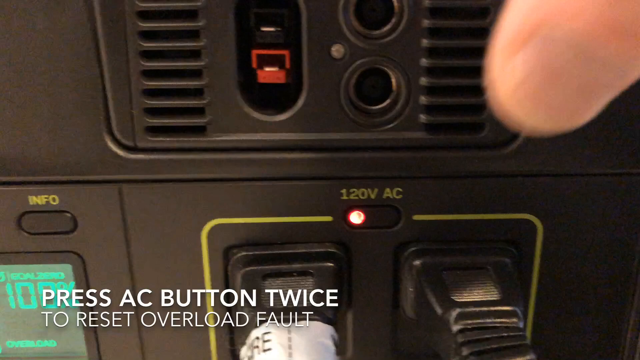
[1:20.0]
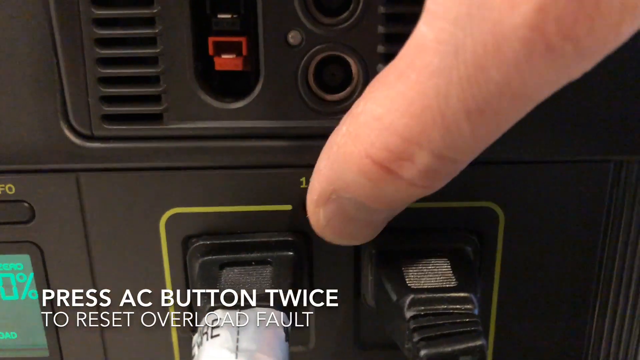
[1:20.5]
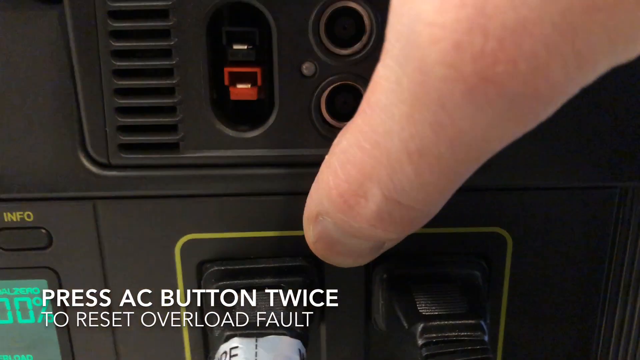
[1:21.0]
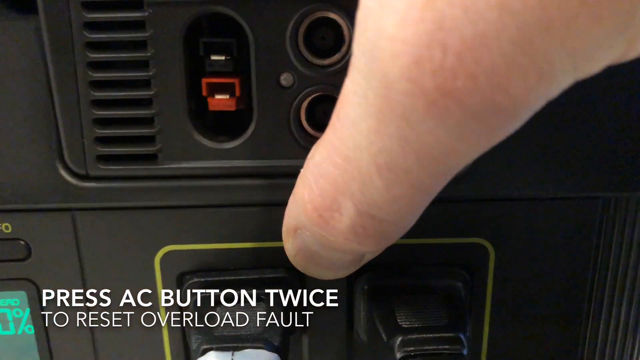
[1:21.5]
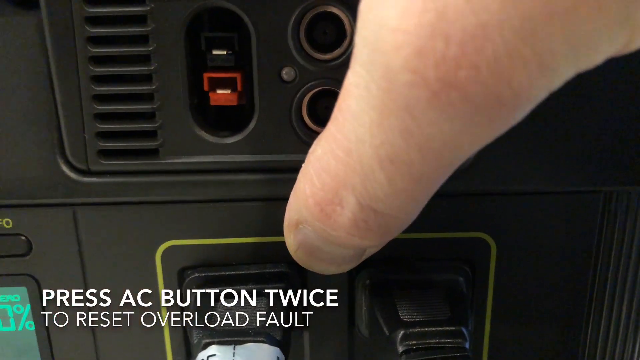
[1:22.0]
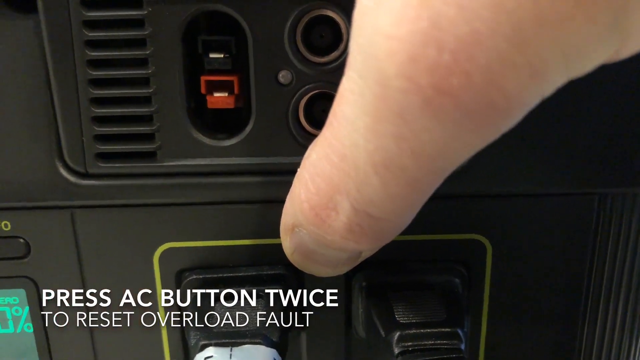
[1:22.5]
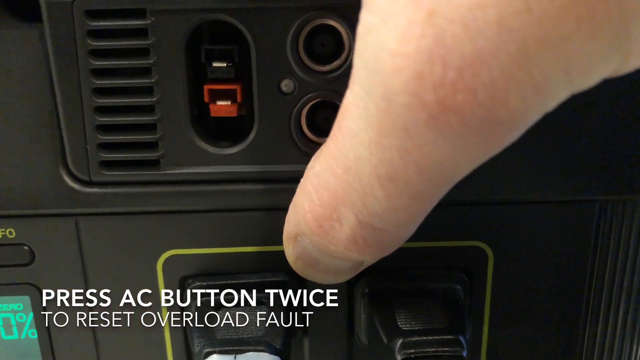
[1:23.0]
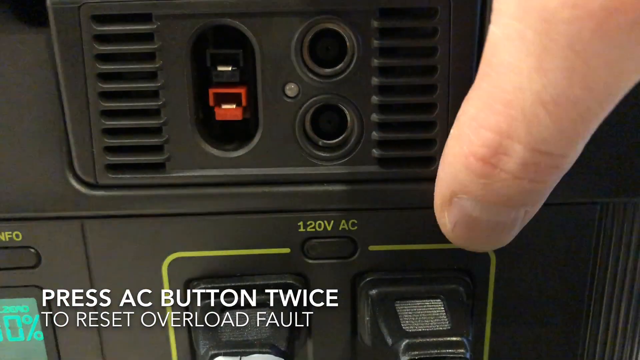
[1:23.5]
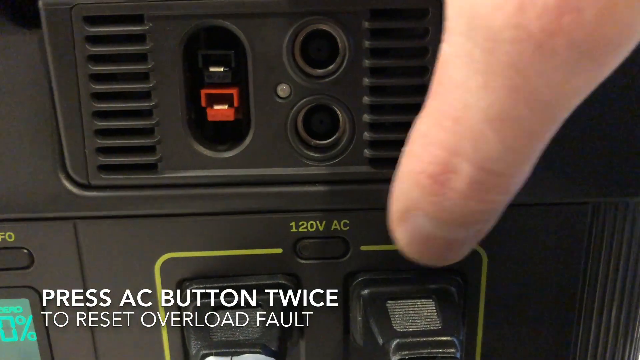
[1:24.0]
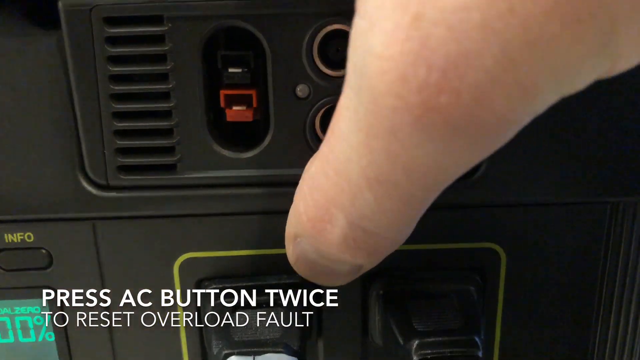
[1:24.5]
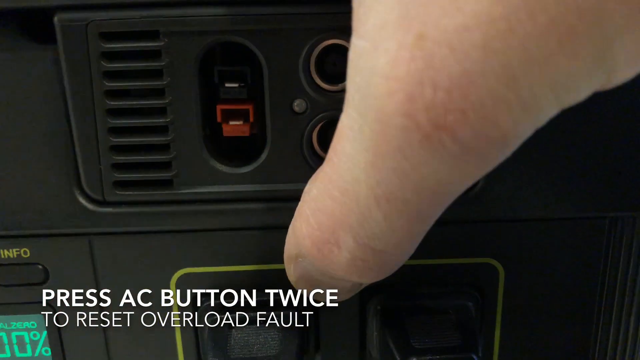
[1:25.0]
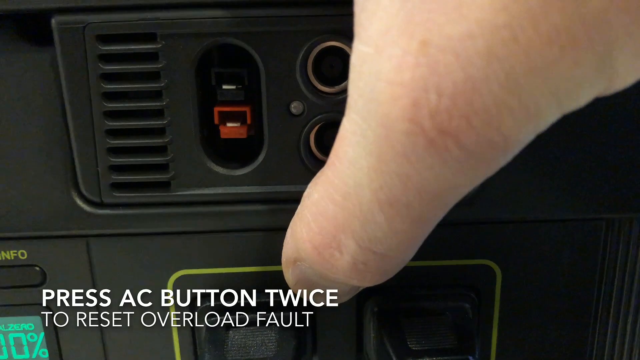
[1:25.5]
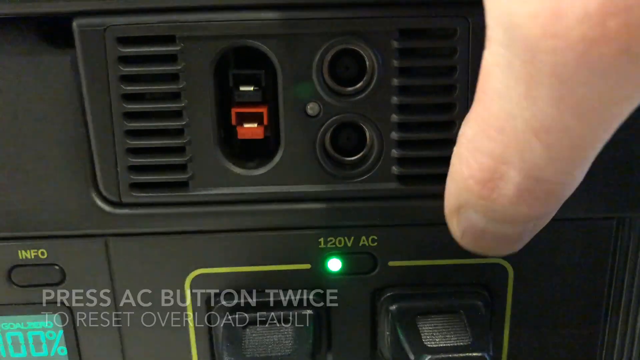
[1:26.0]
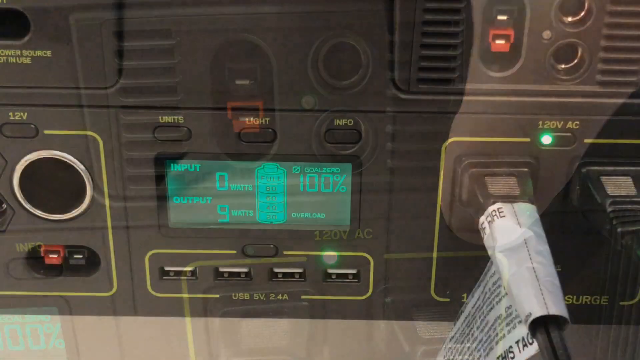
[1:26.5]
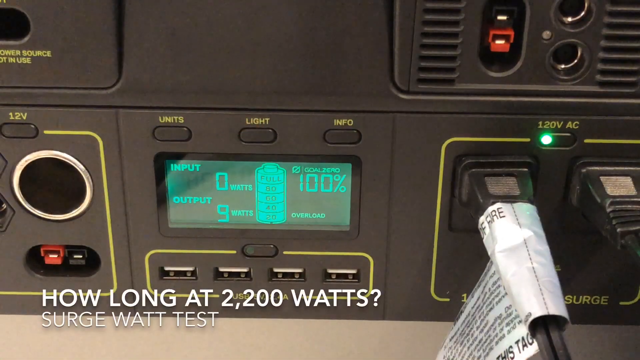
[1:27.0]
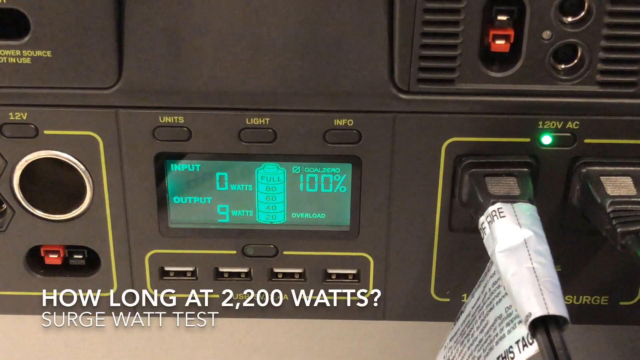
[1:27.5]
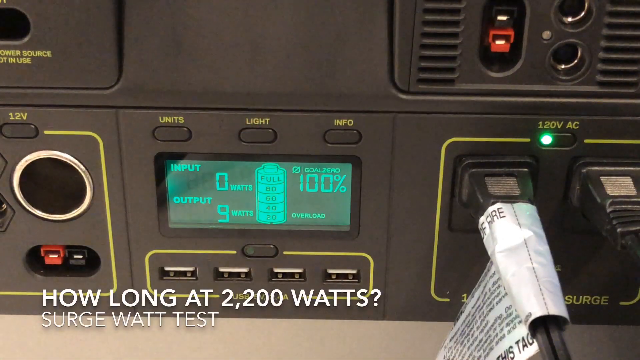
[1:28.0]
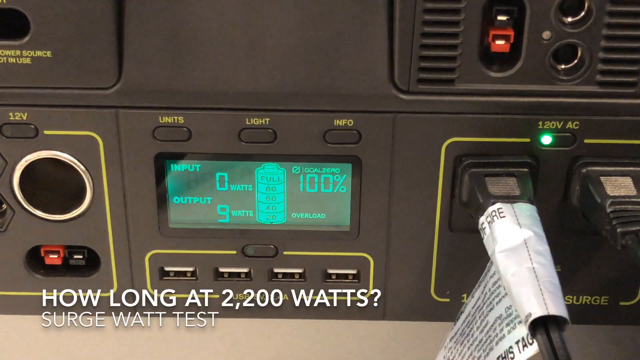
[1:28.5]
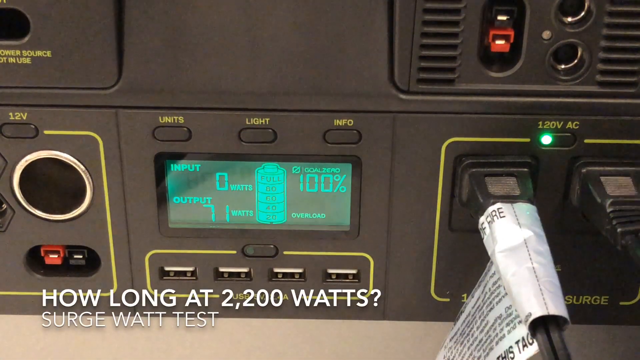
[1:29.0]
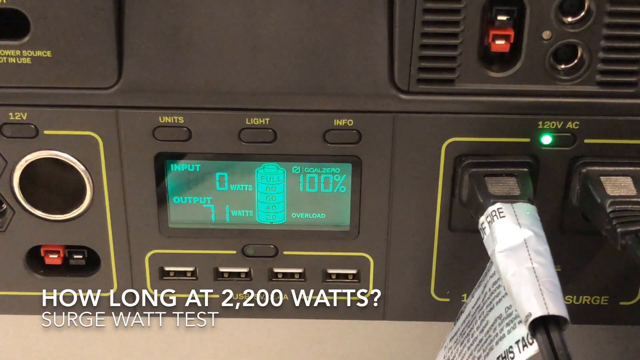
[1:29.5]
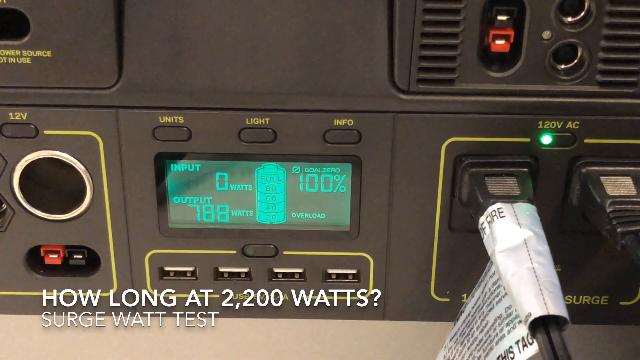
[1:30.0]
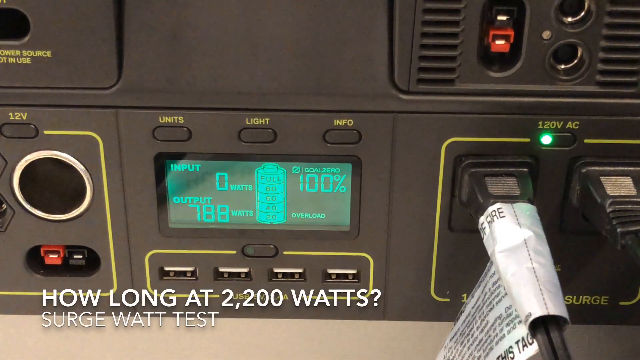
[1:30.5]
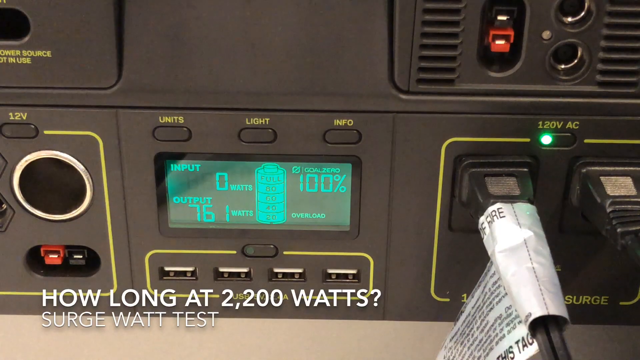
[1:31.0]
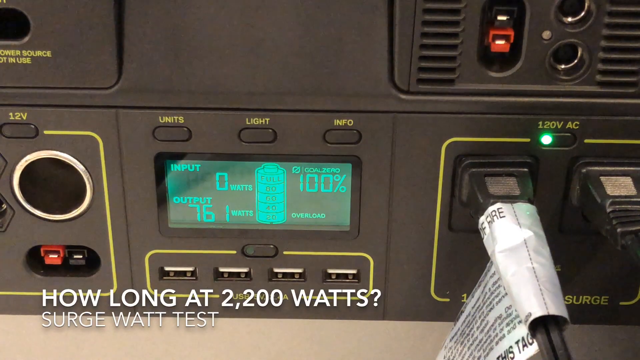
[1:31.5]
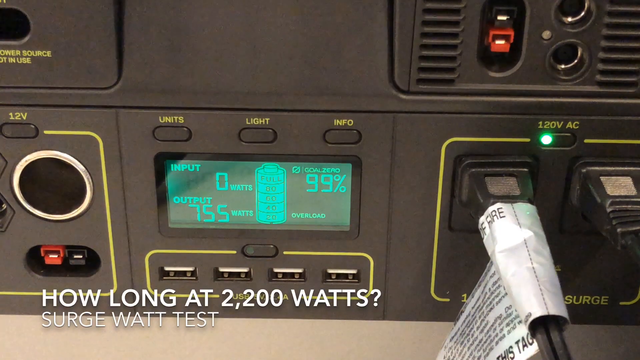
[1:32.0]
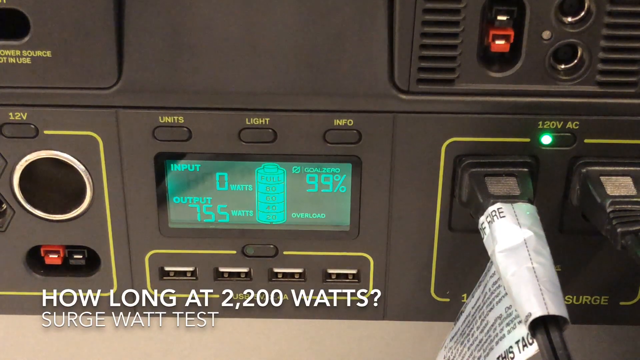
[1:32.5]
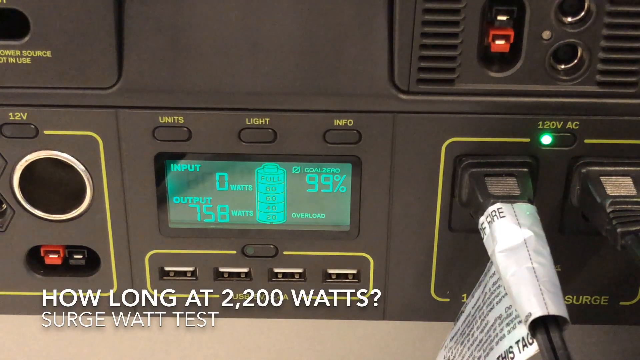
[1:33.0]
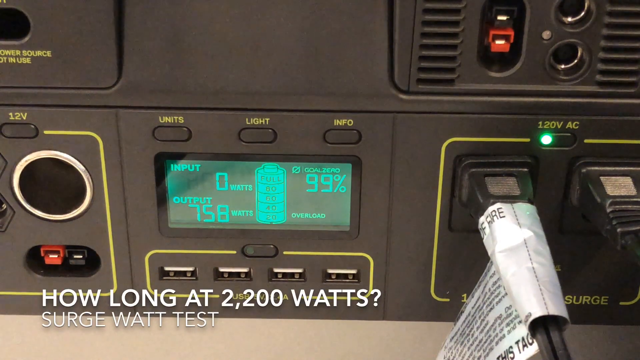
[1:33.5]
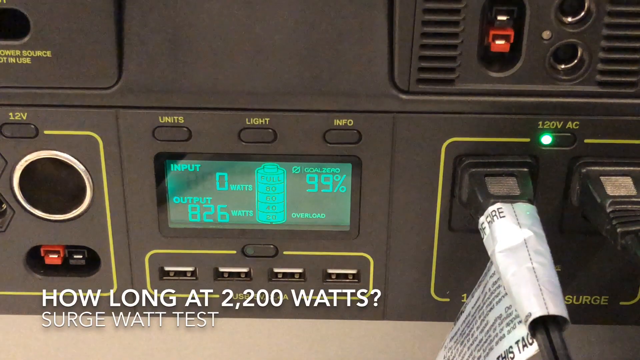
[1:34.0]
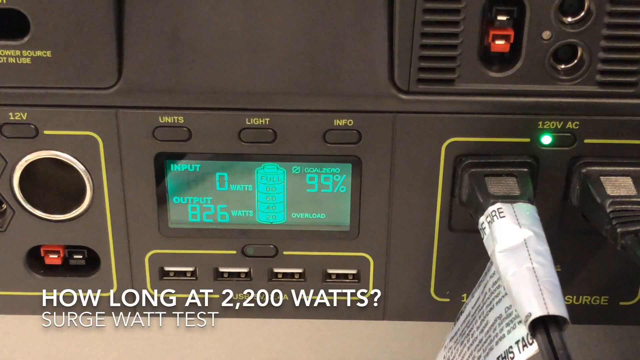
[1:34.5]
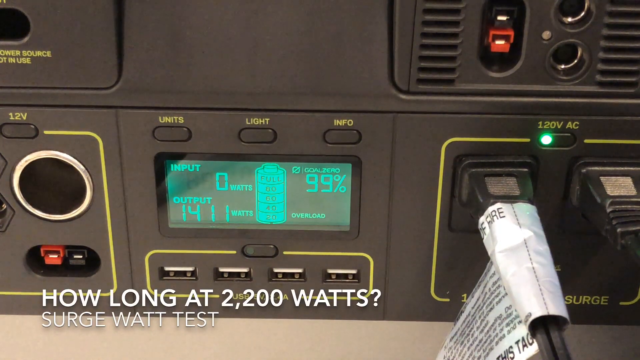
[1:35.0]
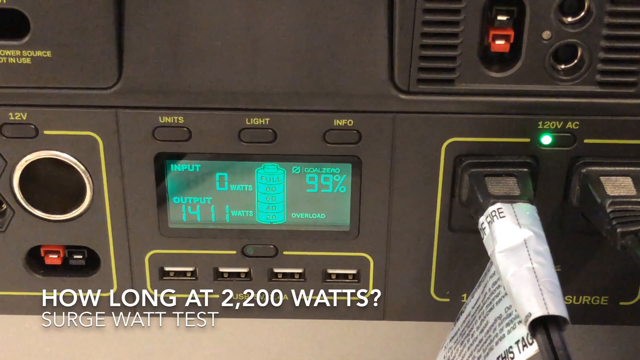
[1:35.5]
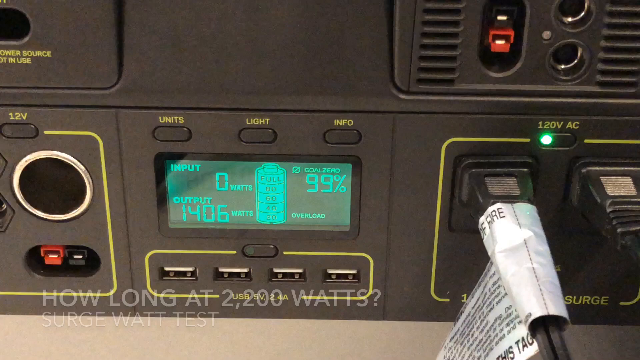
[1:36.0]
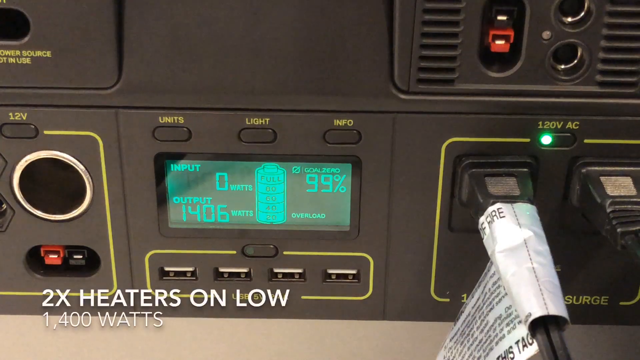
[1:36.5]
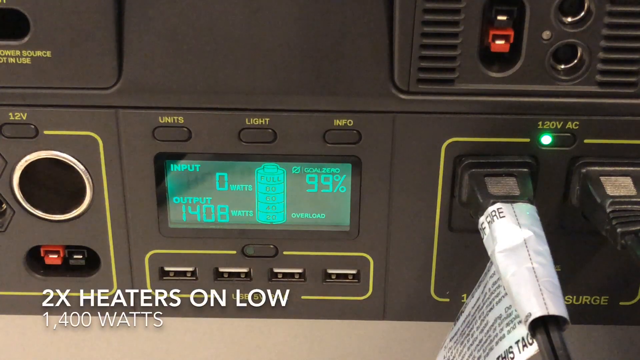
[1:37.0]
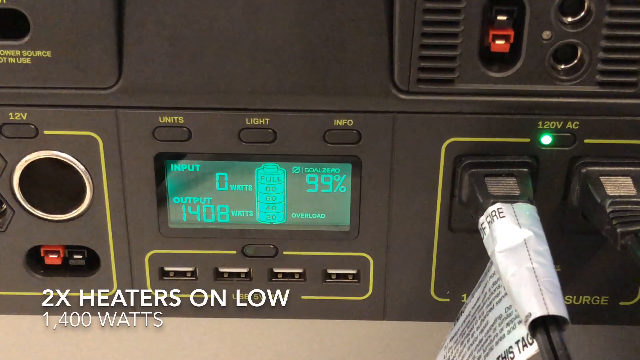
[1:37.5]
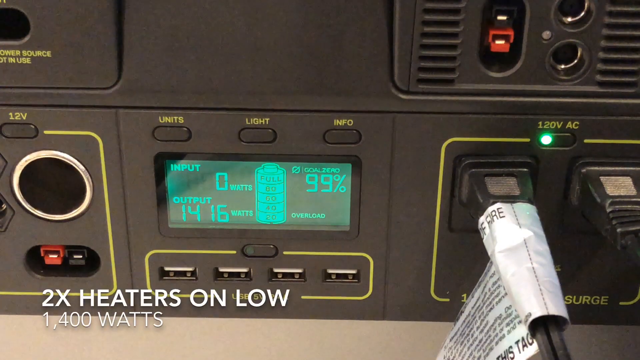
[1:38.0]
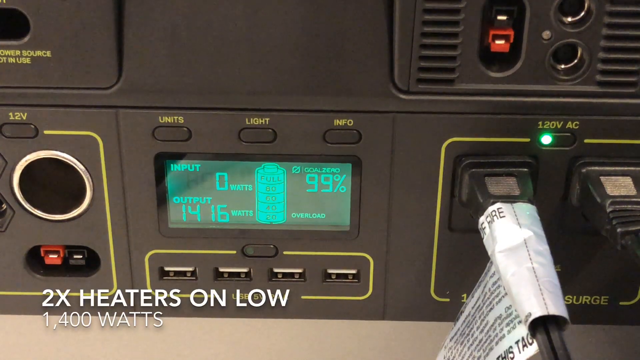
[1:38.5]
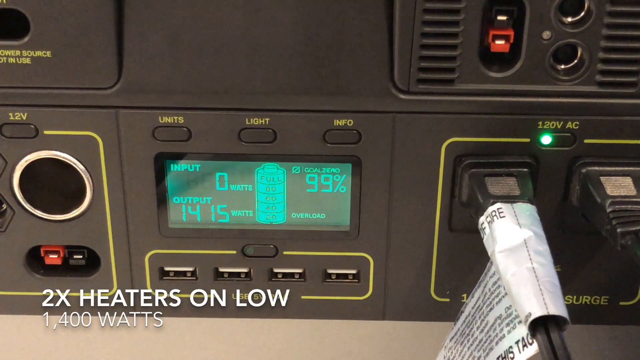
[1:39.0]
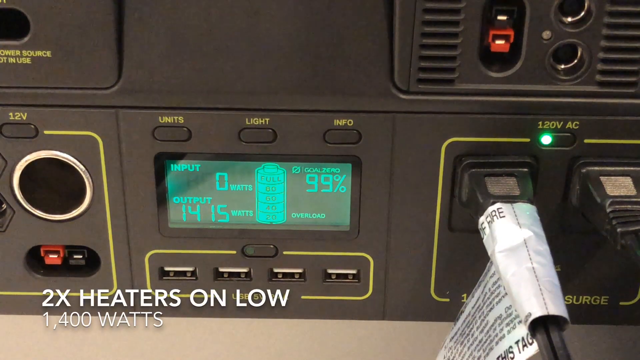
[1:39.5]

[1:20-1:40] On-screen directions read "press AC button twice to reset overload fault", possibly why the heaters turned on and then off. Text reads "how long at 2200 watts surge watt test". A screen illuminated in green measures the power of two heaters plugged into the receiver. A hand presses a button labeled "120V" twice while the screen shows "two times heaters on low", 1400 watts. The view shows only the receiver up close; what is plugged into the outlet is not visible, just a cord plugged into it with a white label around it, the kind attached to a new product. The green lights constantly change as they measure the watts.